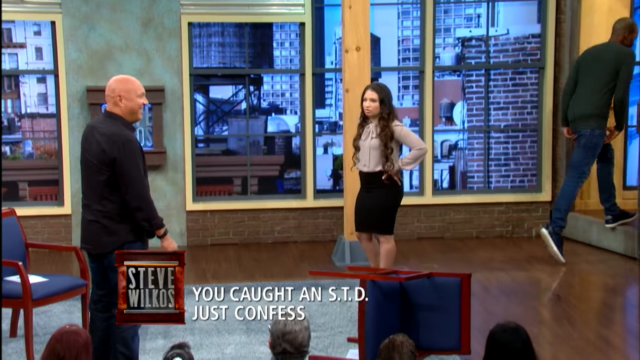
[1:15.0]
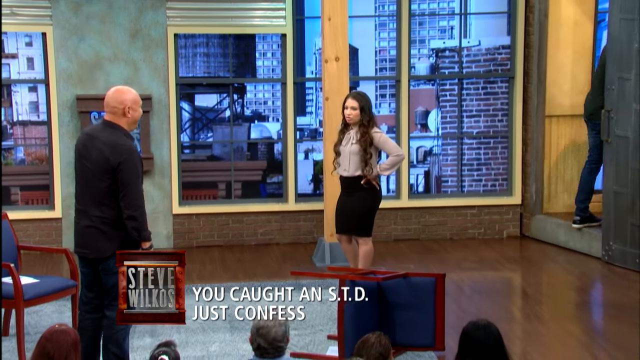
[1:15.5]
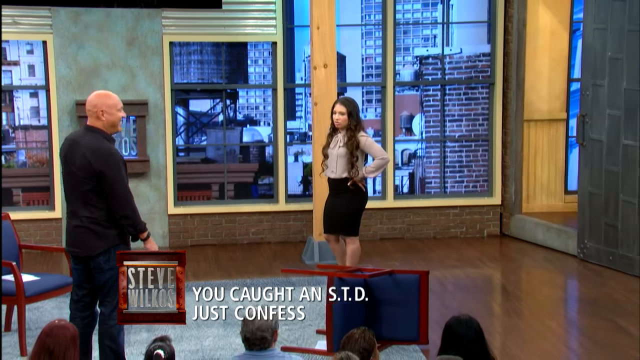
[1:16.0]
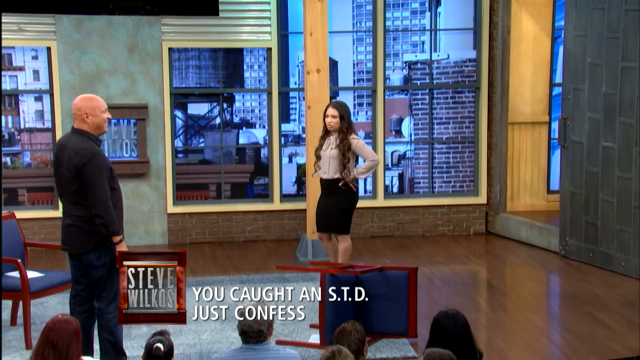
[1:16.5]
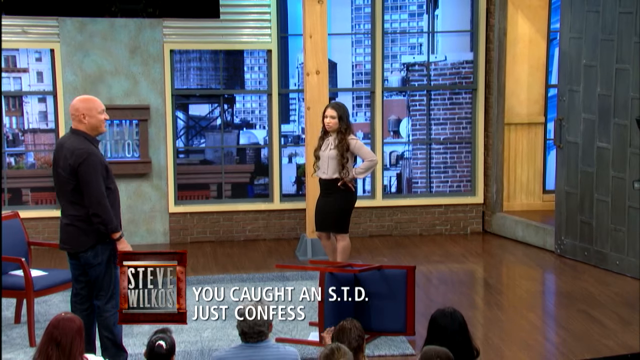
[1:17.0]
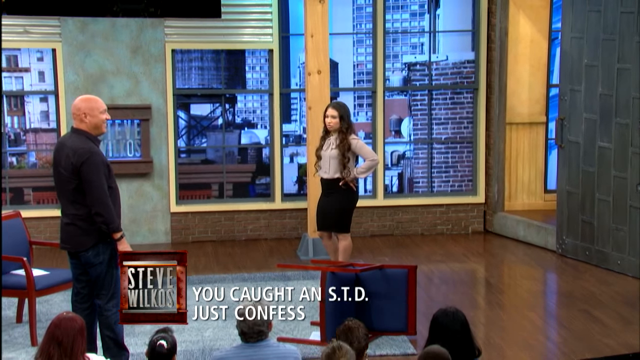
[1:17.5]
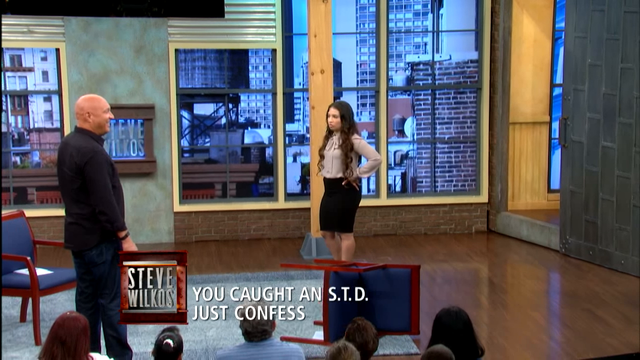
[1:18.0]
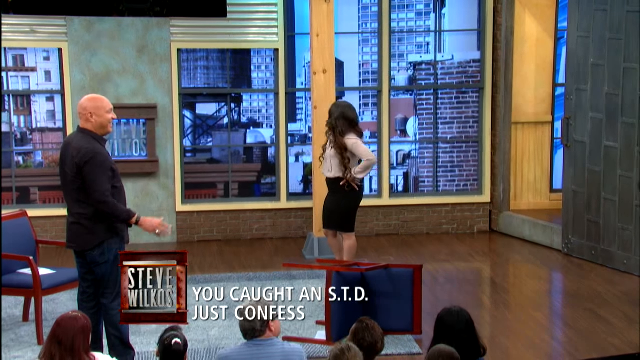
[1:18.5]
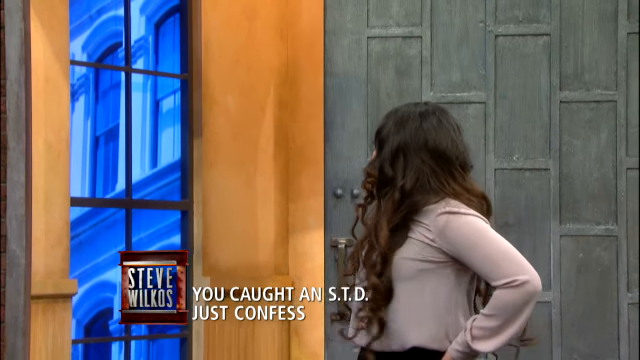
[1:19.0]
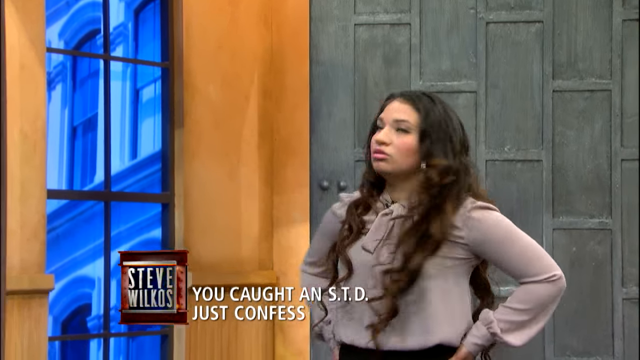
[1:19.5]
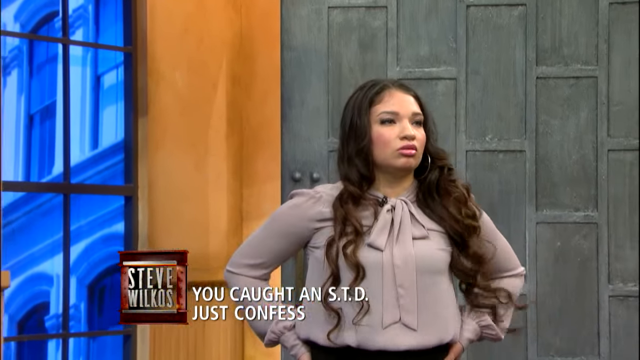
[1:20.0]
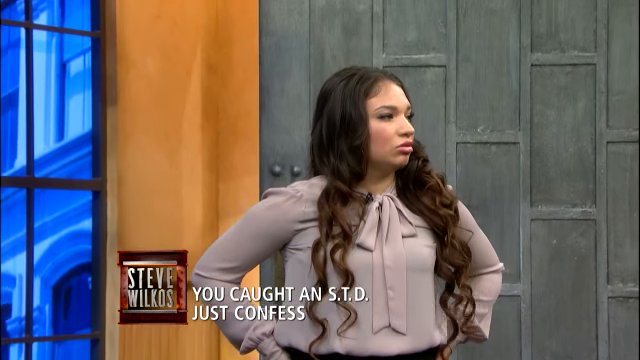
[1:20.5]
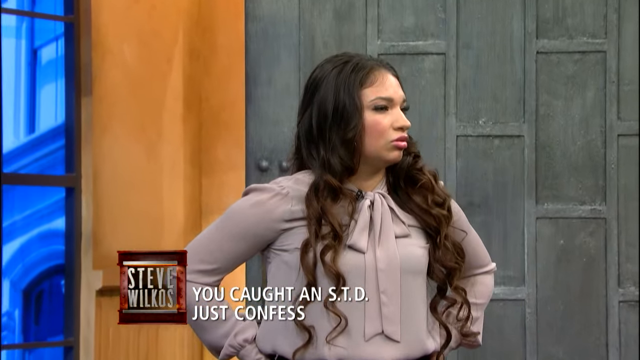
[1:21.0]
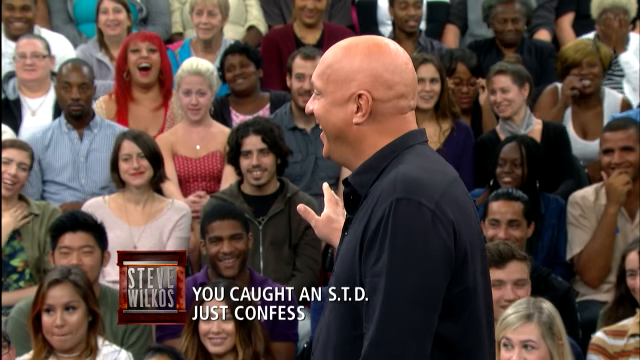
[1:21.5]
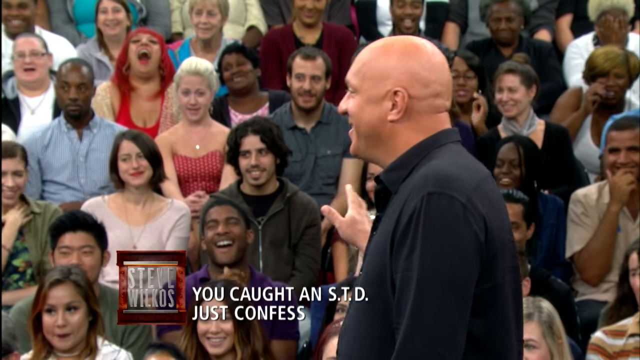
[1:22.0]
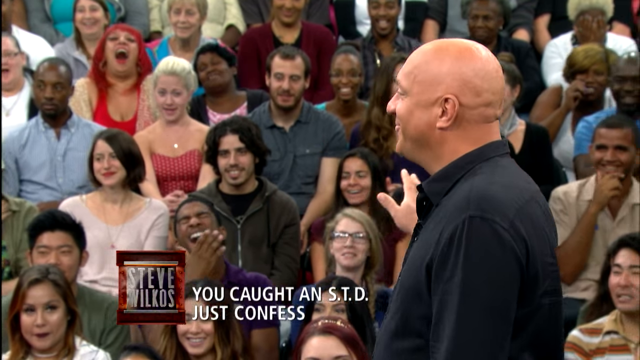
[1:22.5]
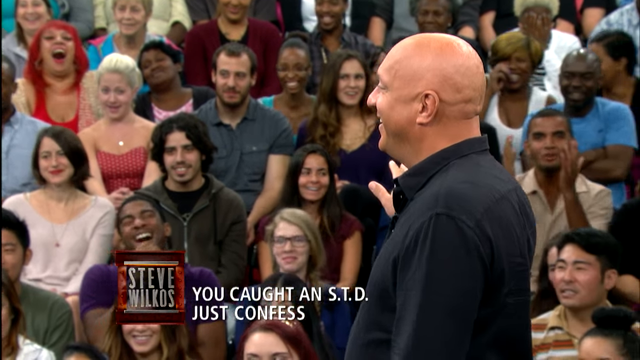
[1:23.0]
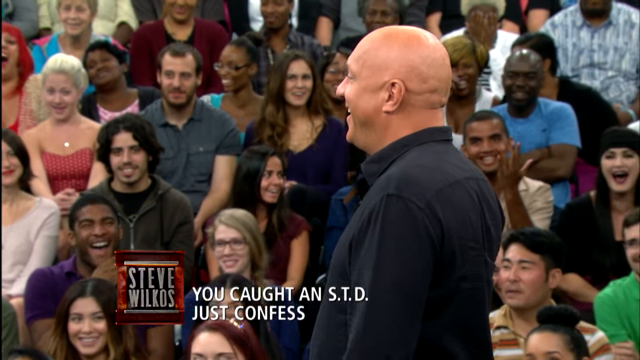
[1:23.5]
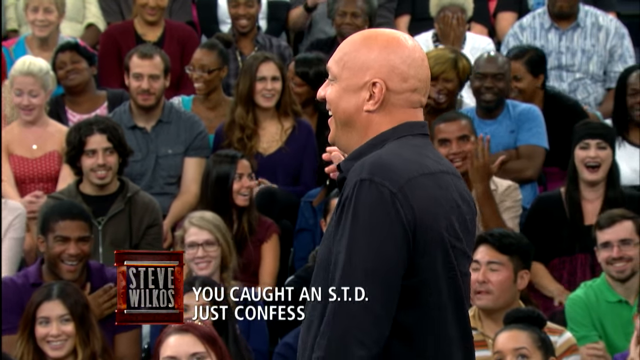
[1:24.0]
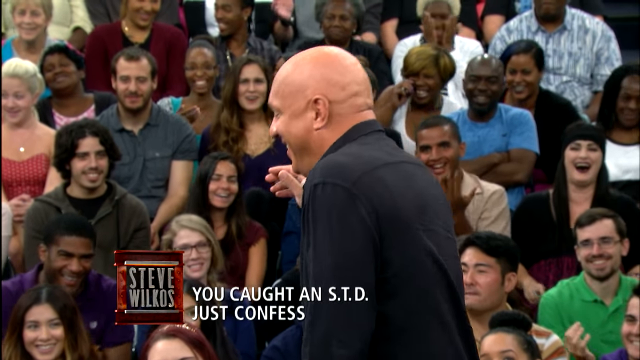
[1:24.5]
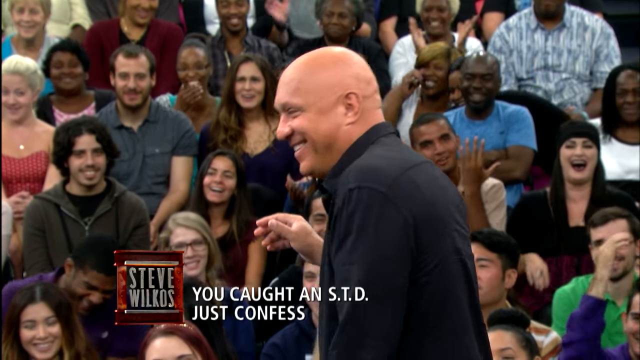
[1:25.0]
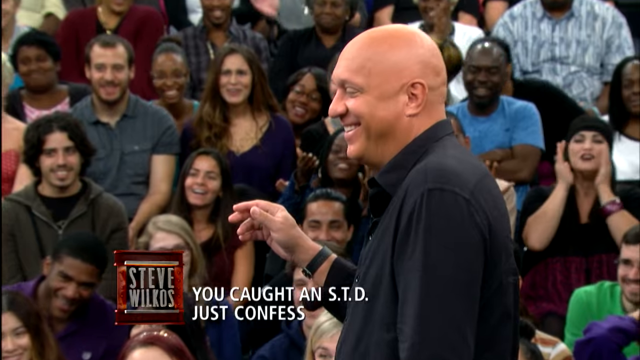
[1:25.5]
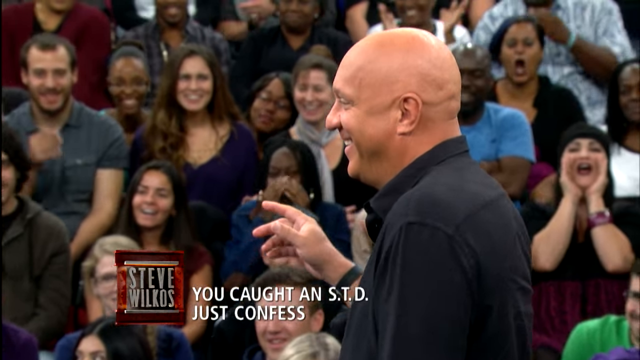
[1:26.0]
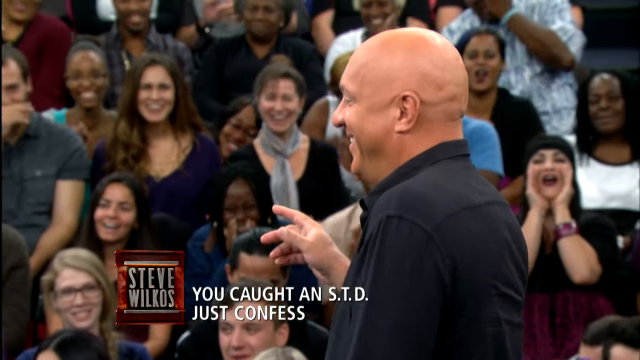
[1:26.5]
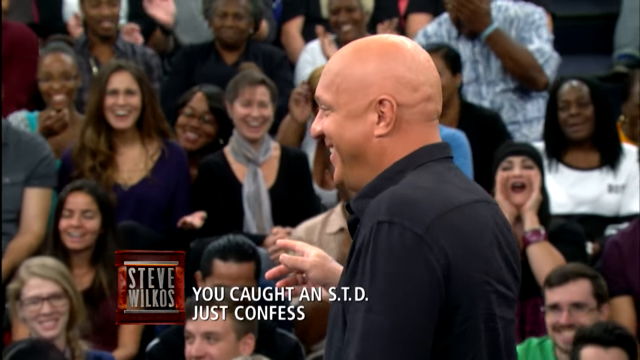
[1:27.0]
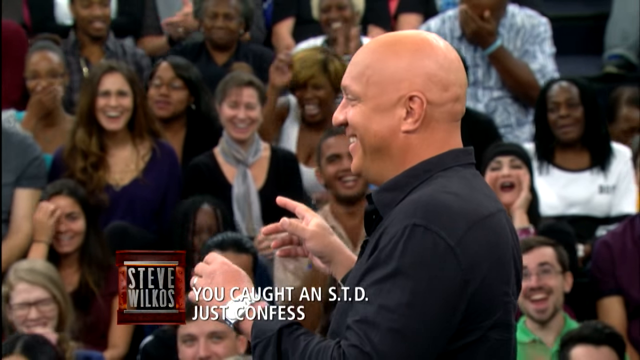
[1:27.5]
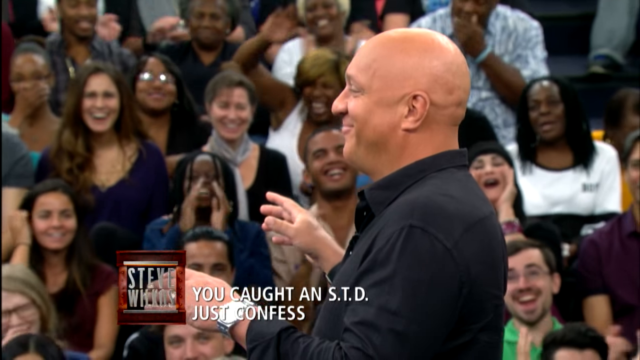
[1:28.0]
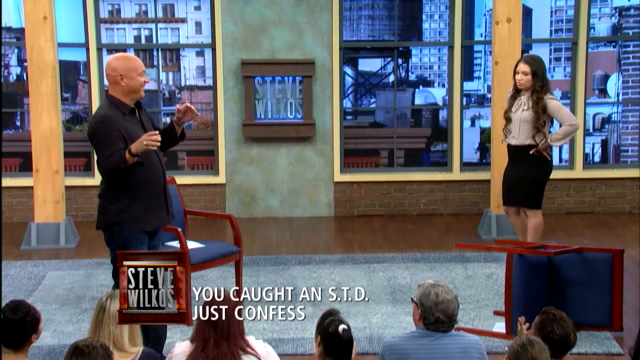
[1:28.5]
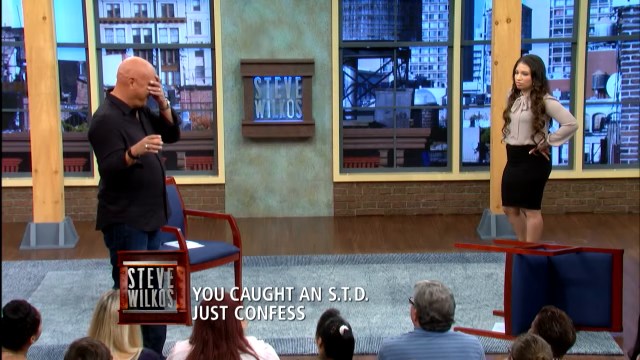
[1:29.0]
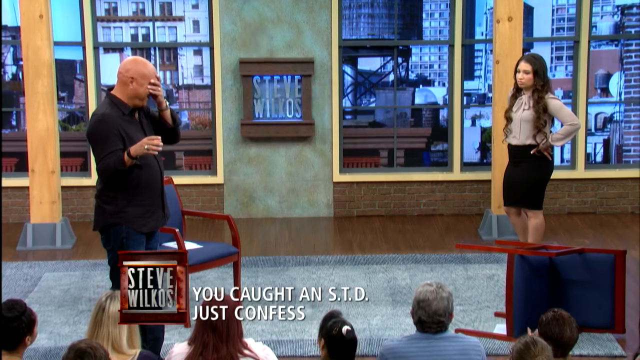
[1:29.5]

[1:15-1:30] The younger man walks completely off the set while the wide shot holds for a moment. On the wall between the host and the young woman is a framed light-up screen that says "Steve Wilkos". After the young man leaves, the woman looks over her shoulder toward where he went, then turns back and looks toward the audience. The host addresses the audience with a huge smile, holding his left hand out toward them, as if making some kind of joke about the situation. The audience is mostly laughing and smiling along with him, and some people are clapping. The video moves over to show more of the audience's reactions. The host is laughing hard, and when the video returns to the wide shot, he brings his hand up to cover his face as if to say how ridiculous it is. In this wide shot, the young woman still has a very serious expression and her hands are on her hips.